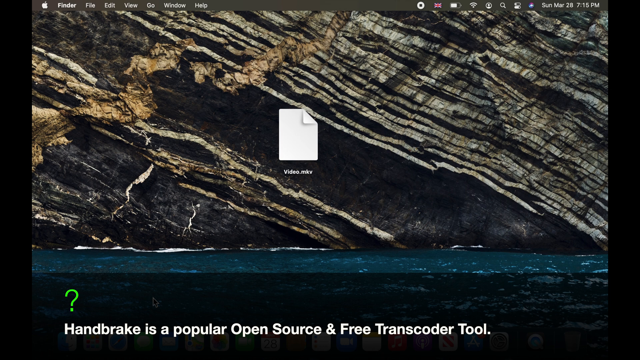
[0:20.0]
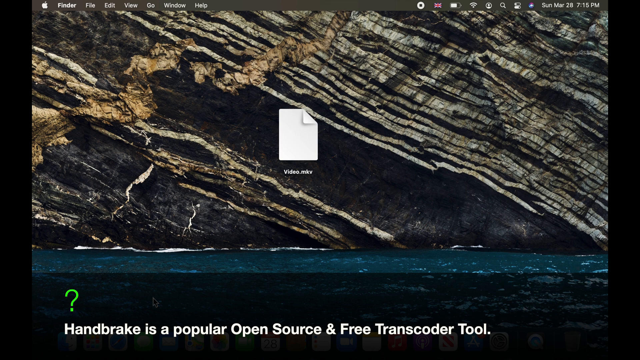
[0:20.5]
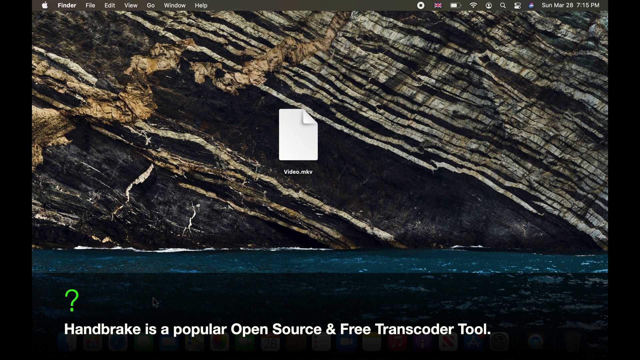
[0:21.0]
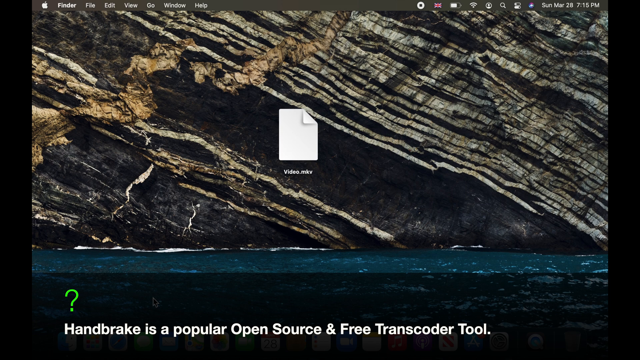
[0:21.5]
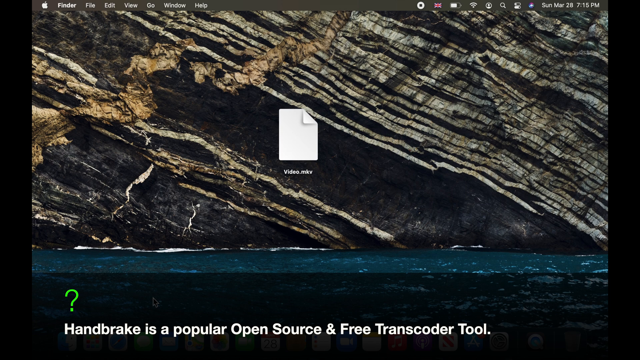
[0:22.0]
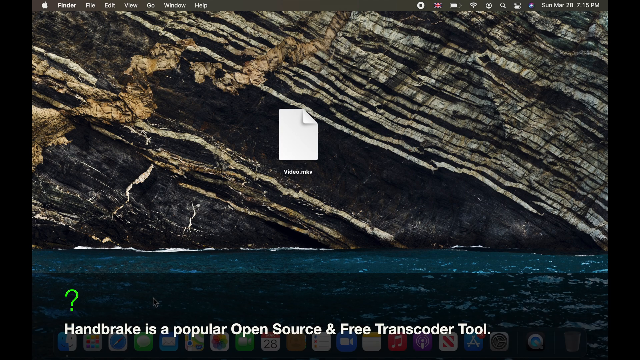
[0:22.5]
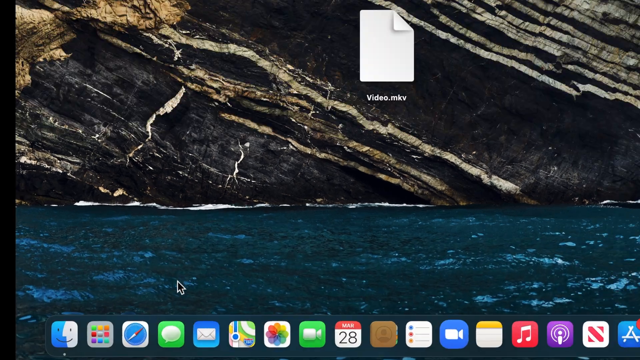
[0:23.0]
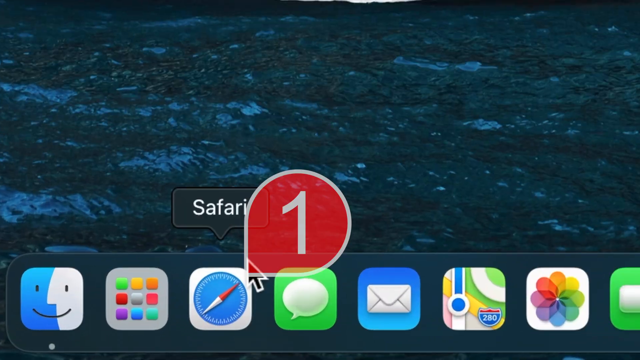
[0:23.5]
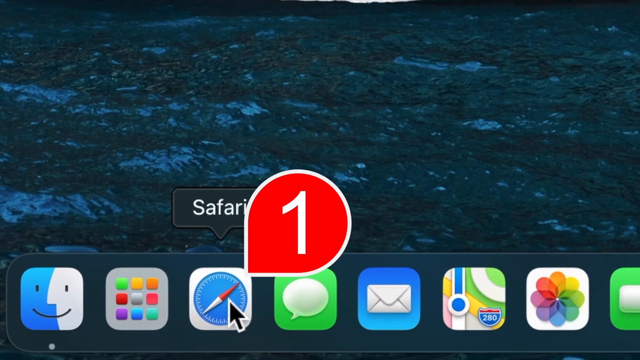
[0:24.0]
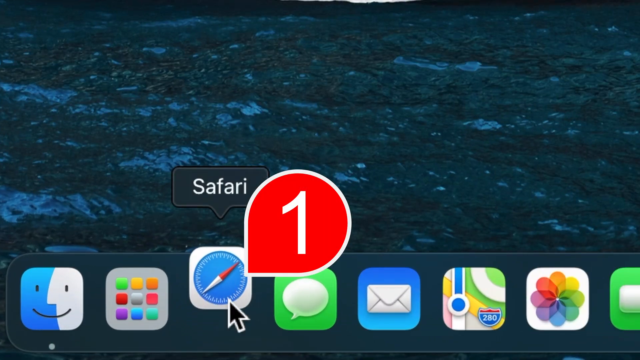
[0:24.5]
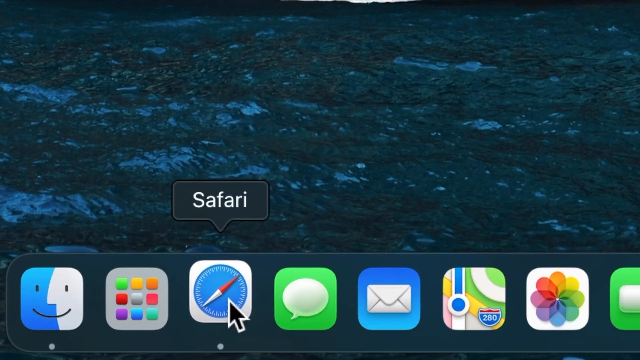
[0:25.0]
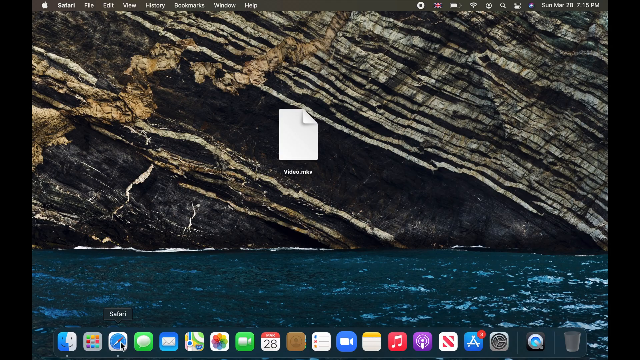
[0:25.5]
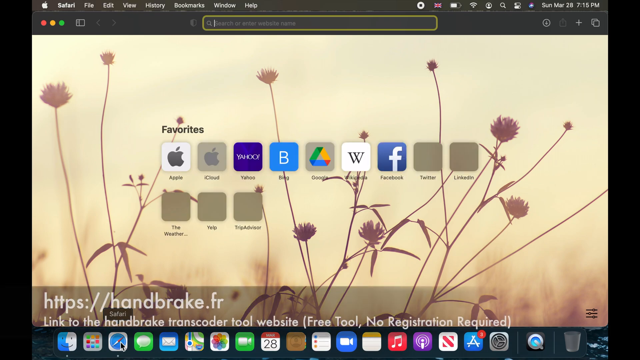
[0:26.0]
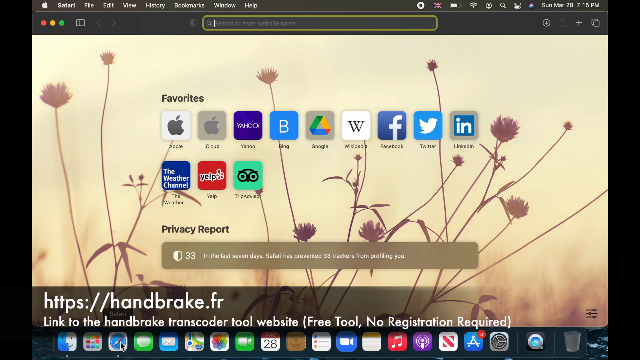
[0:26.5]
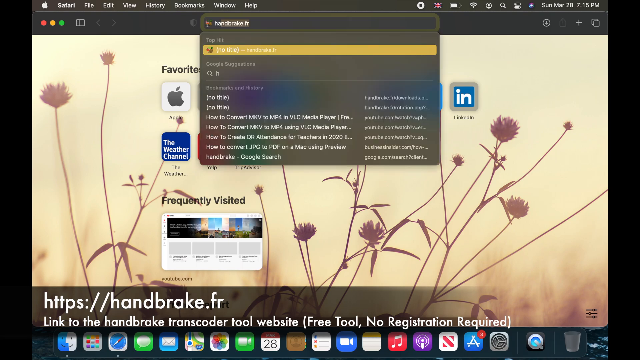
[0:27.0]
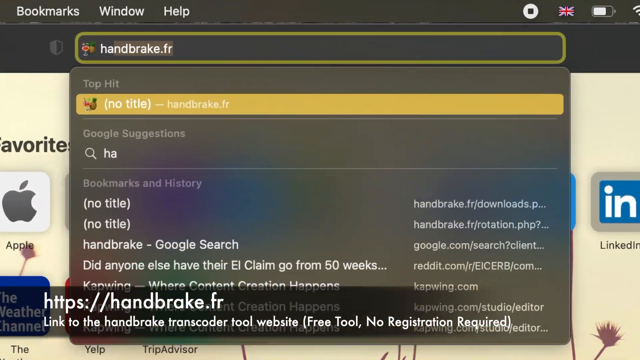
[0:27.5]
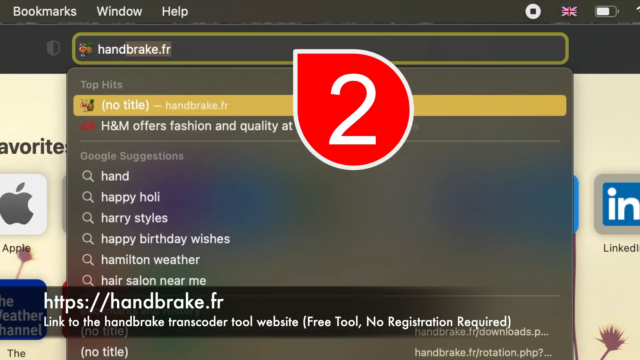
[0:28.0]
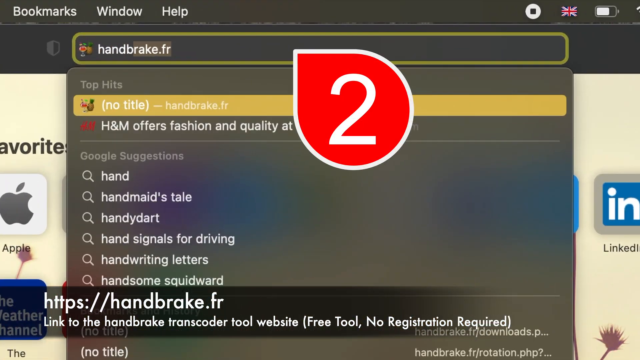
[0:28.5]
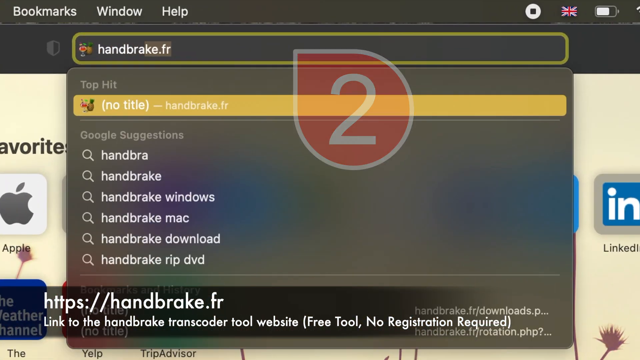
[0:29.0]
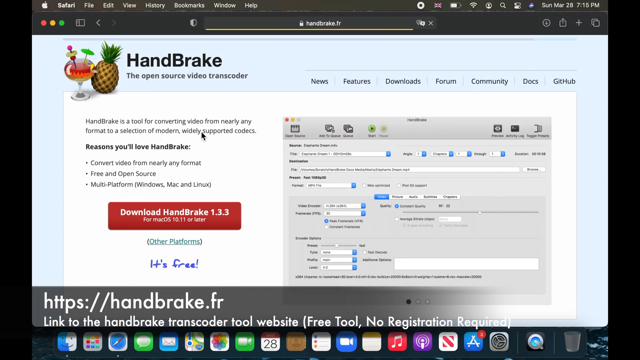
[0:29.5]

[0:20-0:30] A Mac desktop has a wallpaper of rocks, like a cliffside, with water below. In the middle of the screen is one file, represented by a white piece of paper with its right-hand corner folded down. In the lower left-hand corner there is a green question mark and white text reading "Handbrake is a popular free online decoder tool." The view zooms in toward the bottom left, showing all the programs represented by squares with different icons. One is Safari, labeled "Safari" above it in white; its icon is a little blue compass in a white square, with red on the left side of the compass line and white on the other side. Next to it is a red notification bubble showing a big white 1, and the cursor clicks on the icon. Safari opens. The window is mostly black and seems to be in dark mode, with a tan background covered in lots of dark brown flowers and lines coming up. "Favorites" appears in black along with many different websites. In the lower left-hand corner, white text shows an address ending in "handbrake.fr." The view zooms in onto the address bar, where "handbrake.fr" is being typed in white. Another notification bubble points at it, showing a 2 in red, apparently indicating step 2.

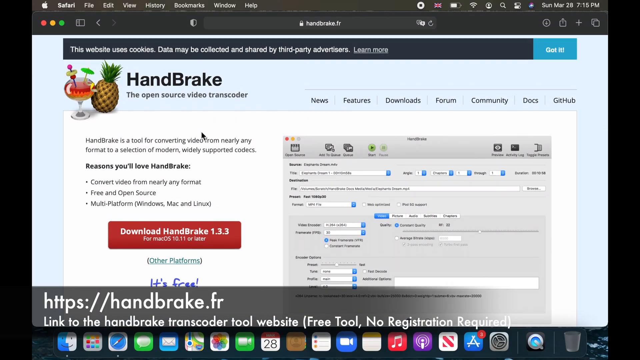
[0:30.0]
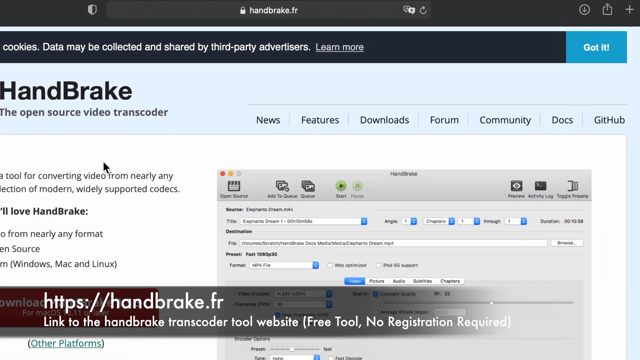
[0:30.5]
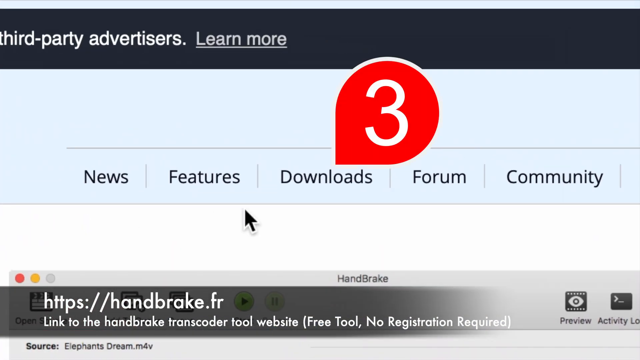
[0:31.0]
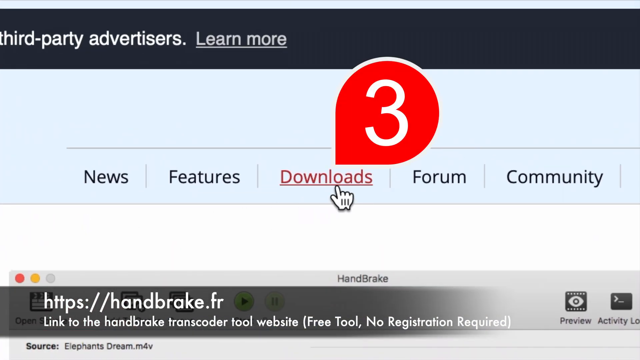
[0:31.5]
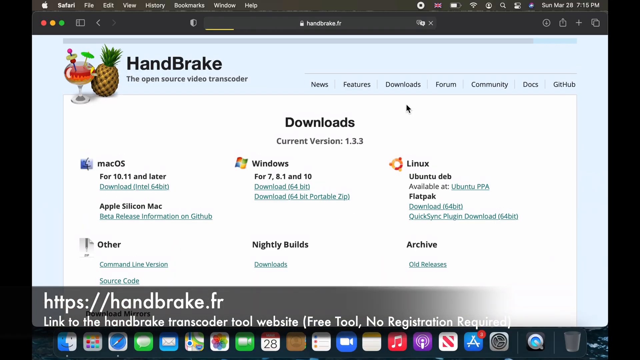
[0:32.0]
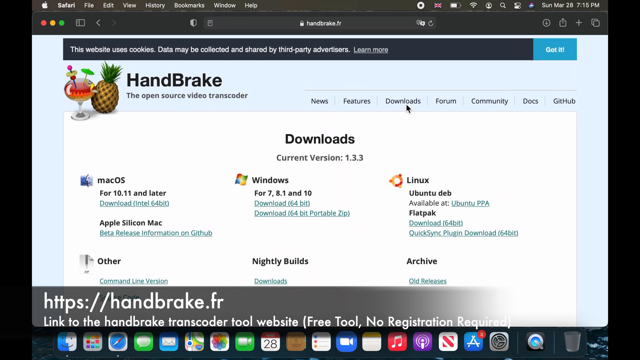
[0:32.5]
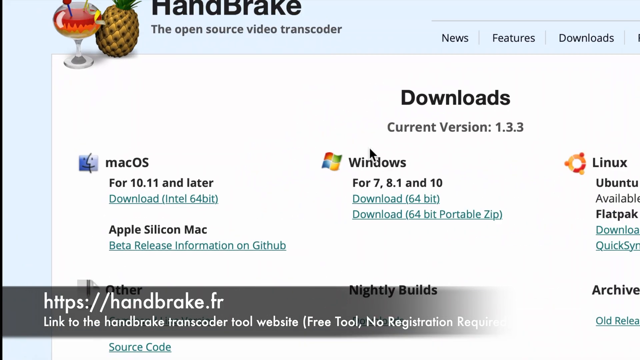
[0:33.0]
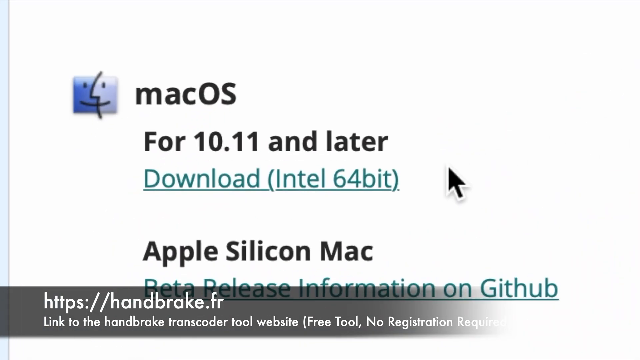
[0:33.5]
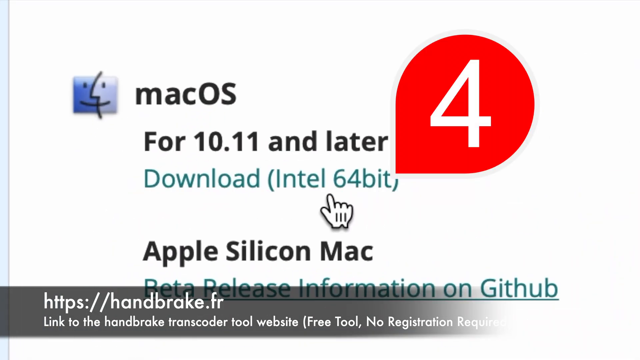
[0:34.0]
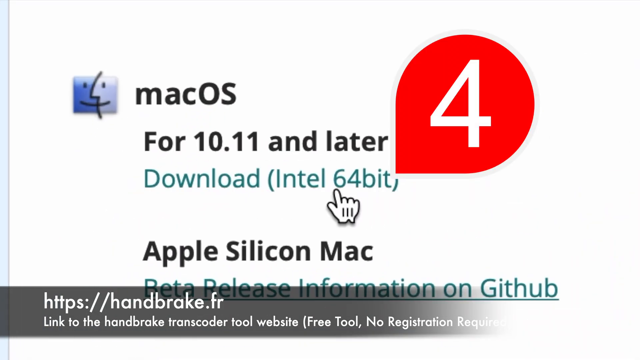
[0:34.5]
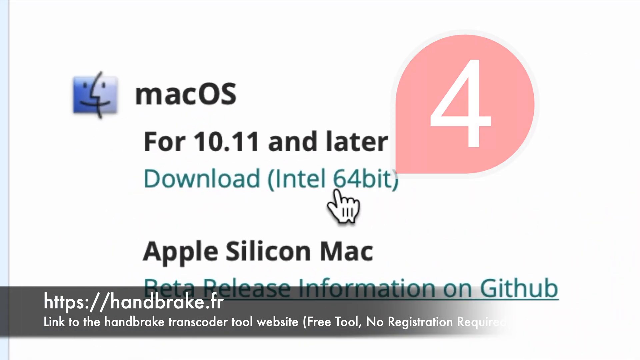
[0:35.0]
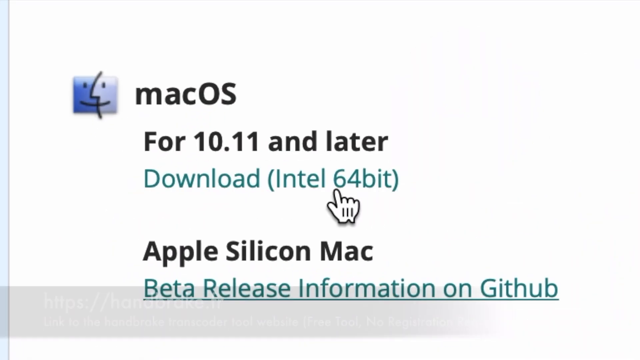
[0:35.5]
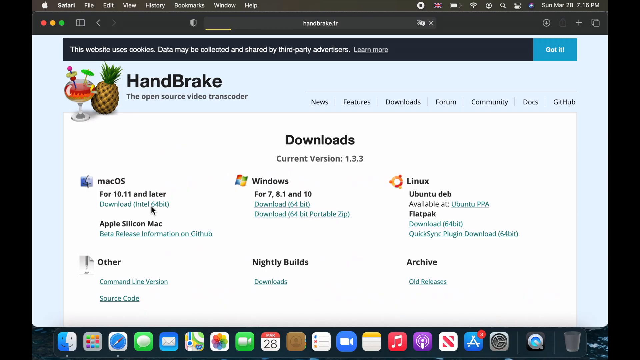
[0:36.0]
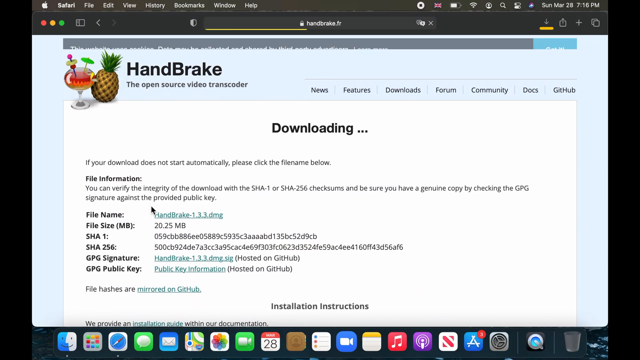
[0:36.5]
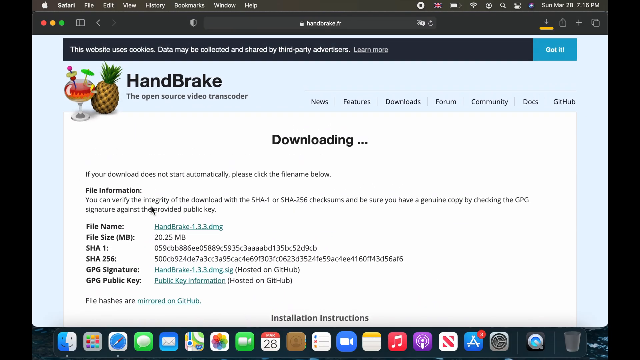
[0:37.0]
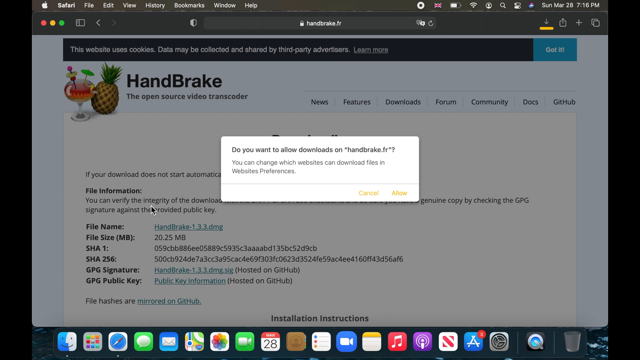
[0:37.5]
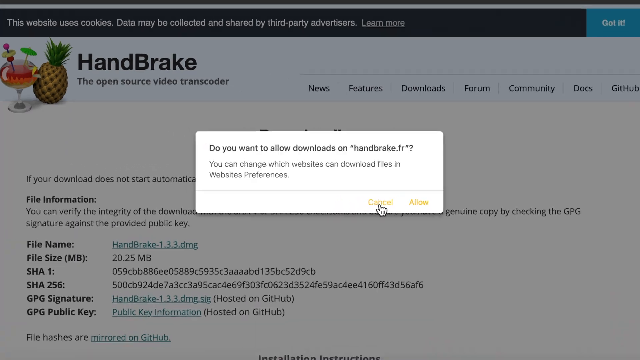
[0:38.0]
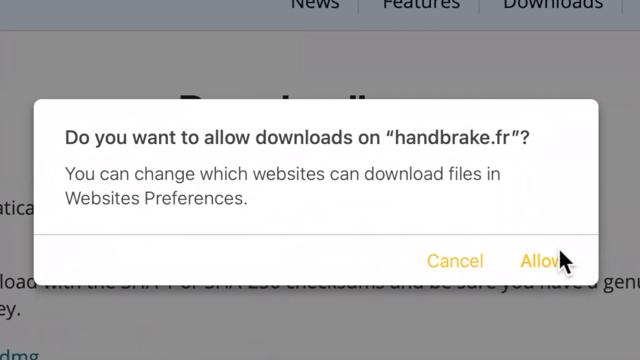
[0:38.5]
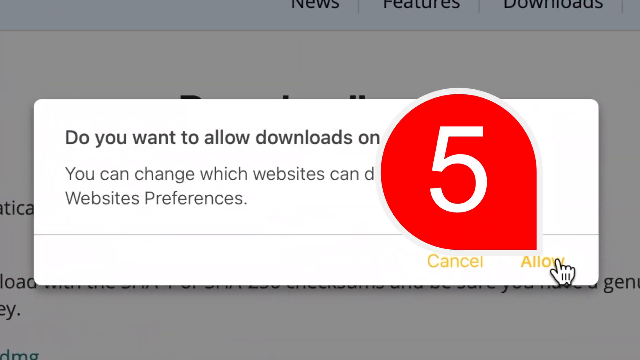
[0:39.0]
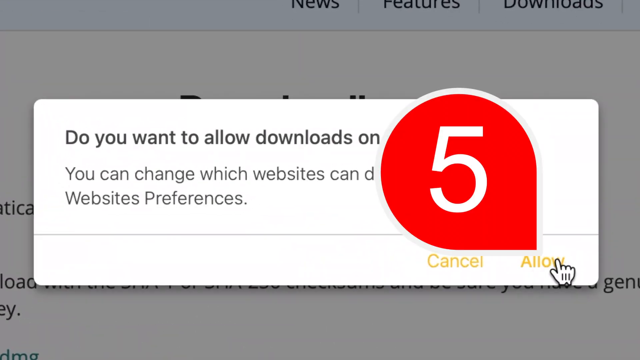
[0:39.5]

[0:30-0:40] Safari on a Mac shows what looks like the Handbrake website, which has a light blue background with "Handbrake" in black in the upper left-hand corner. There is an image of some kind of orange cocktail with a pineapple next to it. The view zooms in on a big red notification bubble with a three in it, which looks like it was placed there by the person making the video. Next comes the downloads page, headed "Downloads" in black. The view zooms in on the left-hand side on "macOS for 10.11 and later," written in black with the Mac symbol next to it, and below it green text reading "Download (Intel 64 bit)." A red notification bubble with a white four pops up, and the cursor, shown as a hand, clicks the Intel 64 bit download link. A page that says "downloading" appears, with a lot of technical information. A white pop-up appears with black text reading "do you want to allow downloads on Handbrake.fr?" and "you can change which websites can download files and website preferences." In the bottom right is yellow text reading "cancel" and "allow." The cursor, now an arrow, clicks "allow," and a red notification bubble with a white five pops up. The cursor sometimes turns into a cartoon glove hand and other times stays a regular arrow pointer.